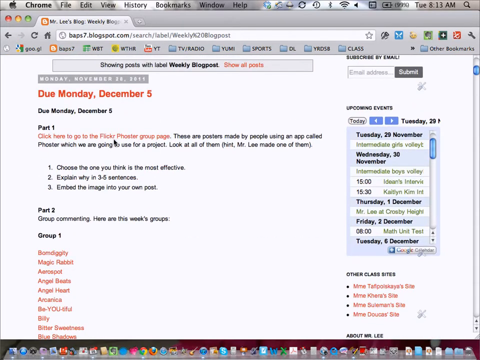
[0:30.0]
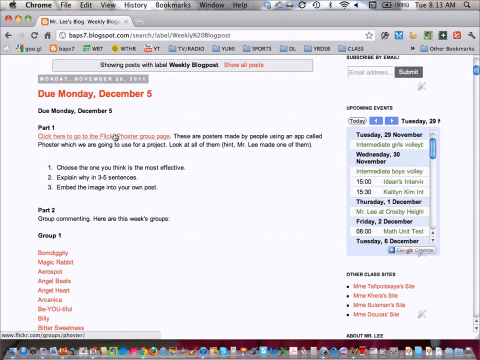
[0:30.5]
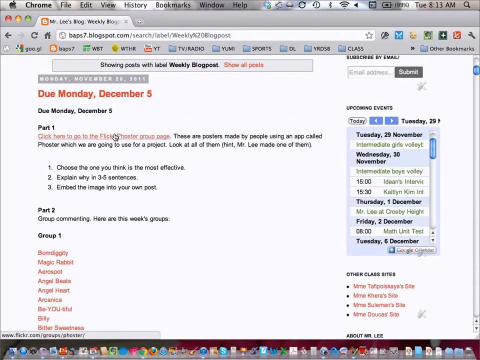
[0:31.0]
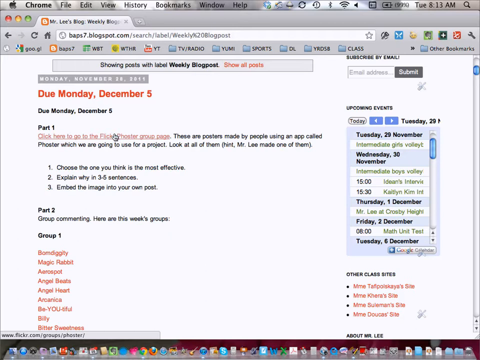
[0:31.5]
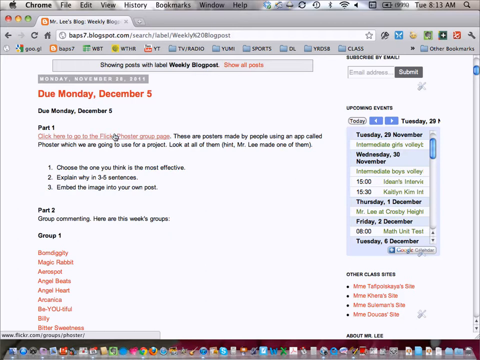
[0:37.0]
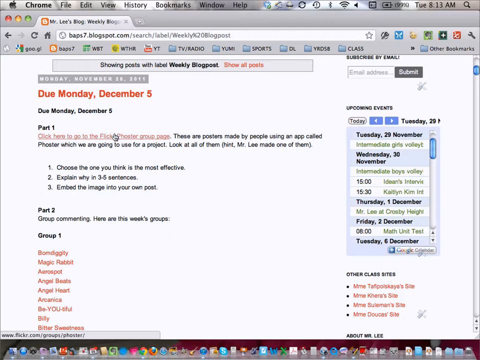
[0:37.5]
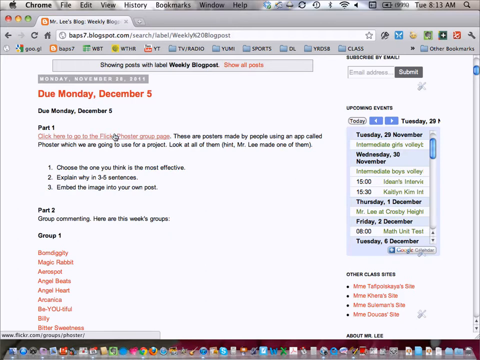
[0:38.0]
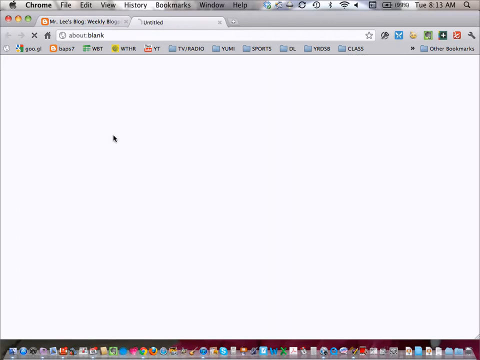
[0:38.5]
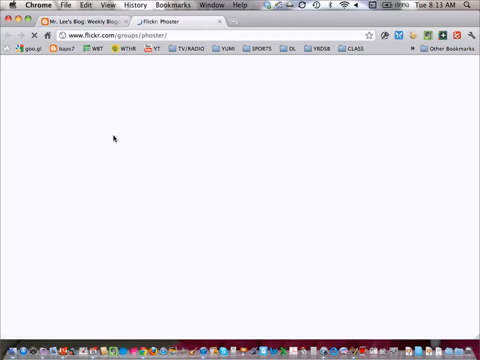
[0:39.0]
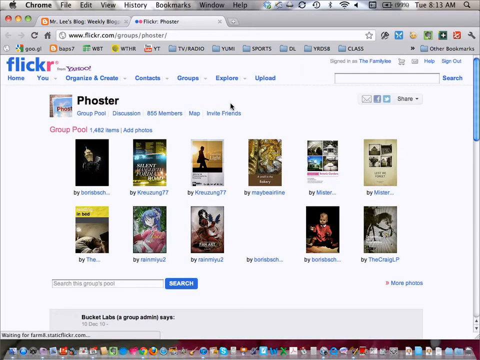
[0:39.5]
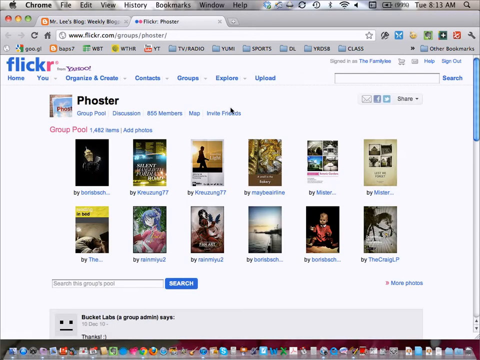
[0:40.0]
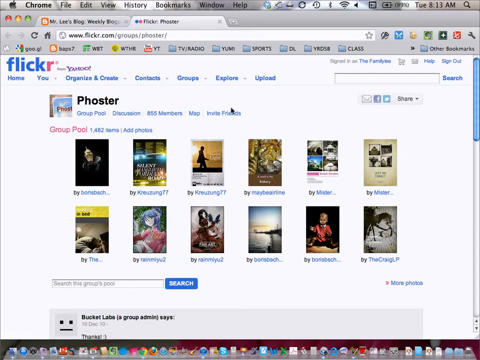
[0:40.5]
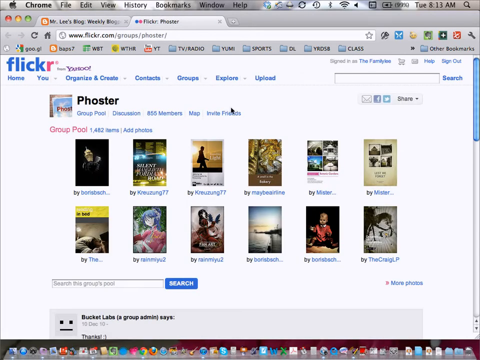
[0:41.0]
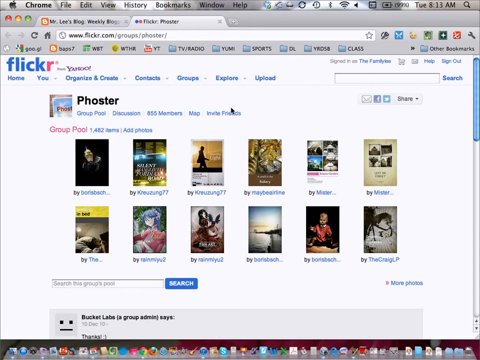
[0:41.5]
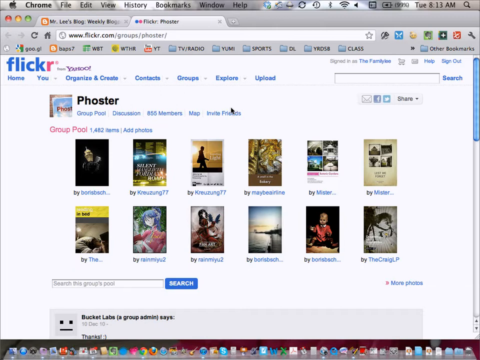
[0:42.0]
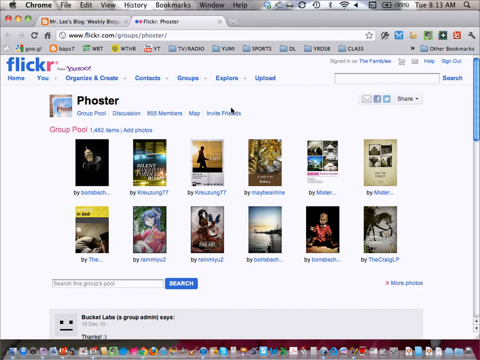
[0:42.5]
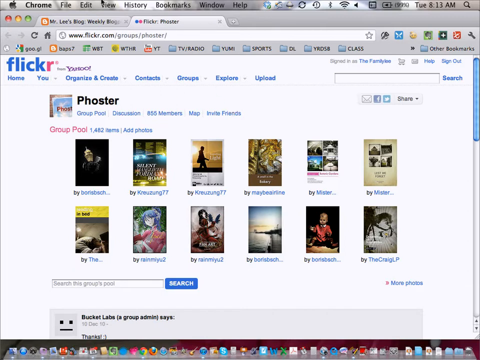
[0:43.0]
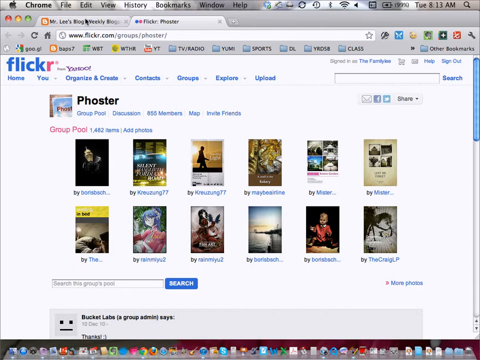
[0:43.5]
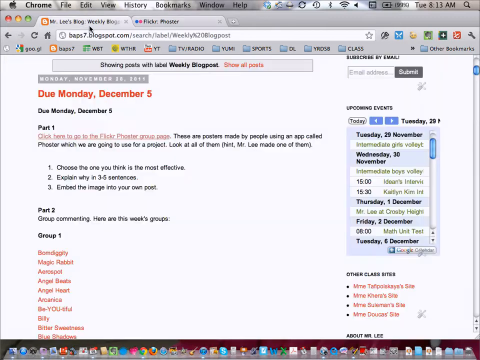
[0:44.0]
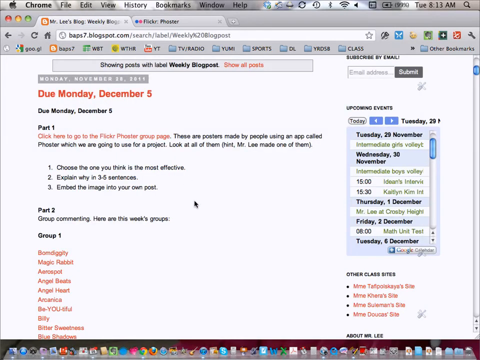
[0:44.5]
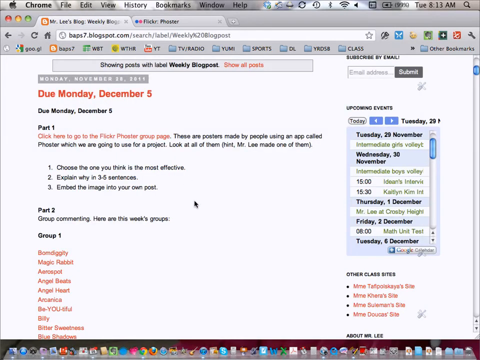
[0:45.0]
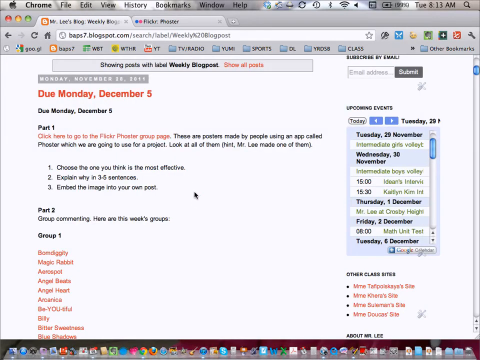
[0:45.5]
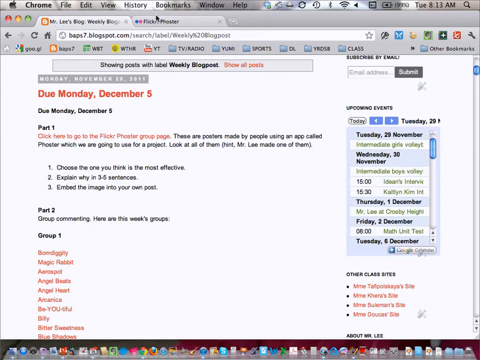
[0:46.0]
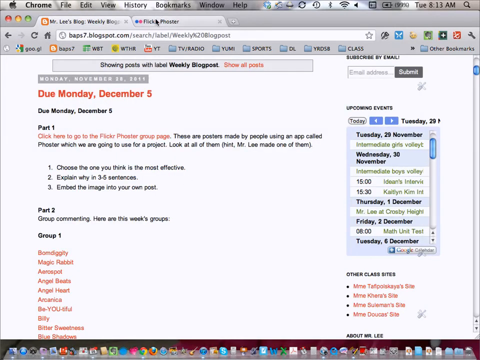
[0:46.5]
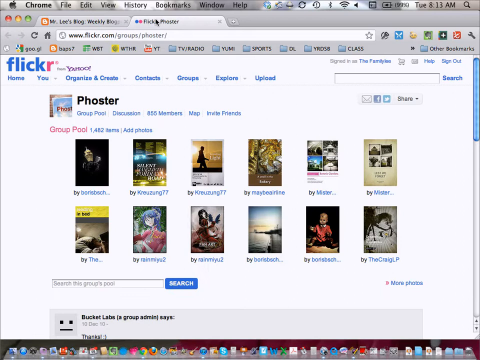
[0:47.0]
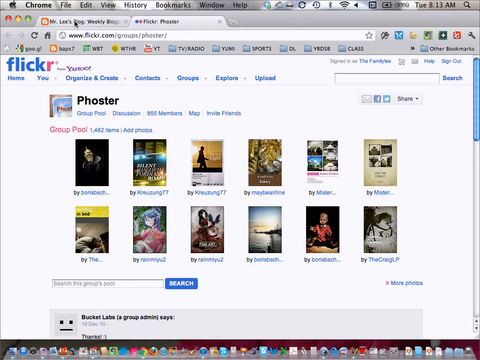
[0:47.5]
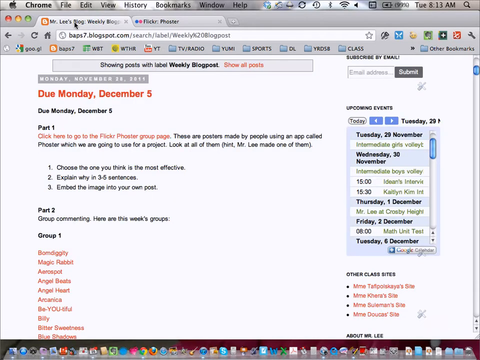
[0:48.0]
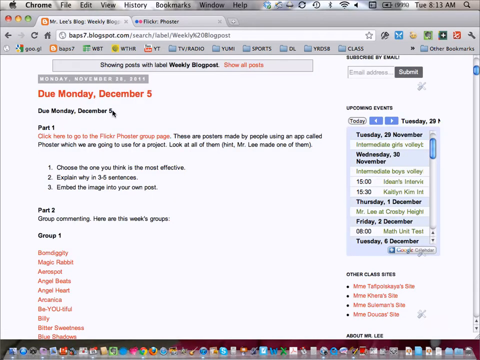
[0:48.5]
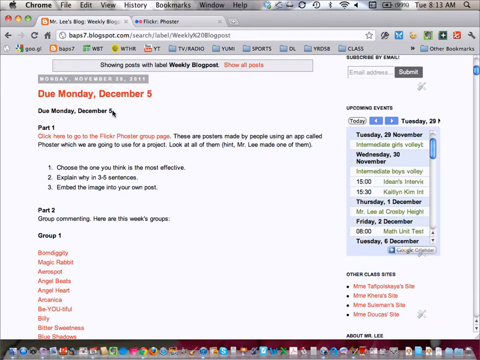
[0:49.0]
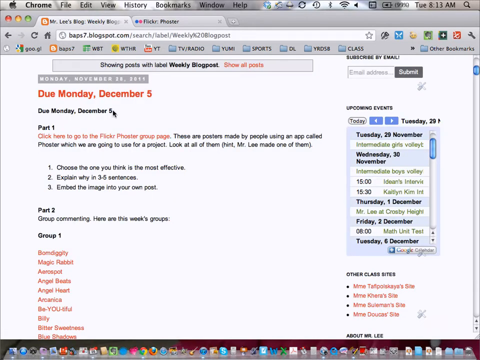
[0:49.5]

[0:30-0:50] The cursor moves to the linked text under the text "part 1," which reads "click here to go to the Flickr foster group page" in red underlined text, indicating a link. The cursor hovers there for a second before clicking the link, which opens a new tab in the same window showing a Flickr.com webpage, with the Flickr logo and the Yahoo logo in the top left corner. The page is titled "Foster," and multiple posters are shown in small preview boxes. The mouse moves to the top row of the screen, hovers over the first tab in the Chrome window, and clicks it, returning to the class homepage. It then clicks back to the Flickr tab, then quickly back to the Mr. Lee blog blogspot tab. That tab is shown with the cursor hovering near the left side of the screen, and the page scrolls up.